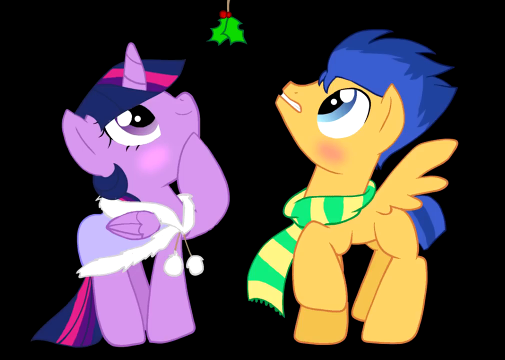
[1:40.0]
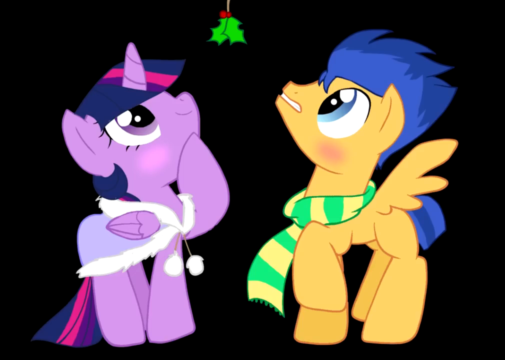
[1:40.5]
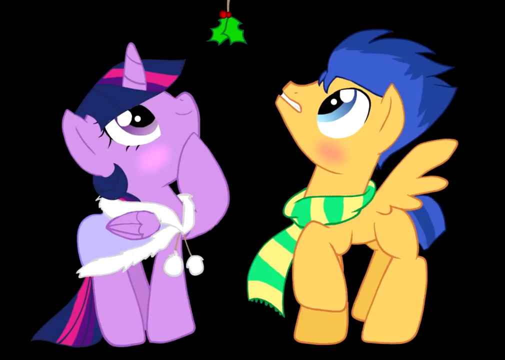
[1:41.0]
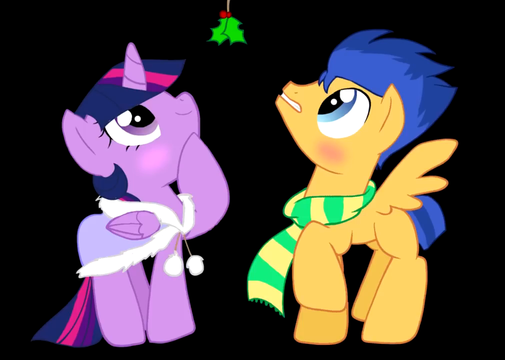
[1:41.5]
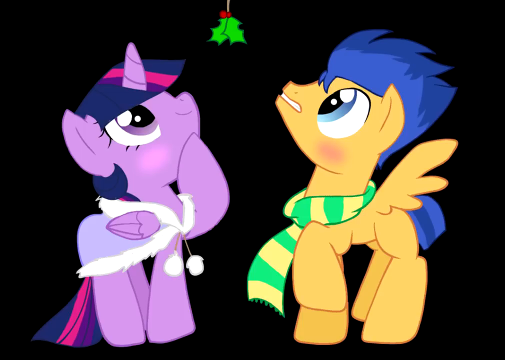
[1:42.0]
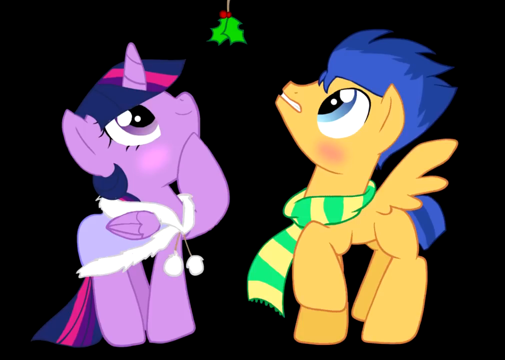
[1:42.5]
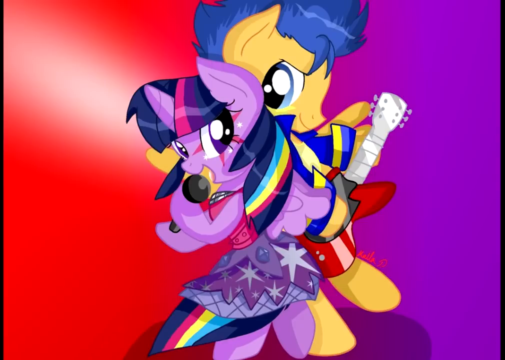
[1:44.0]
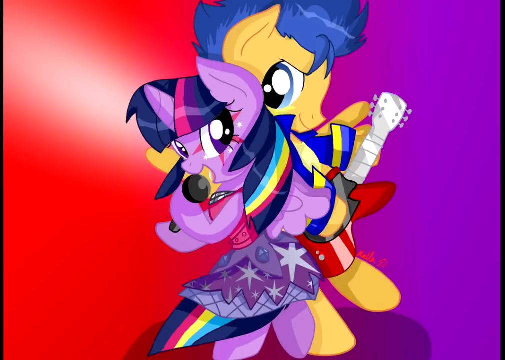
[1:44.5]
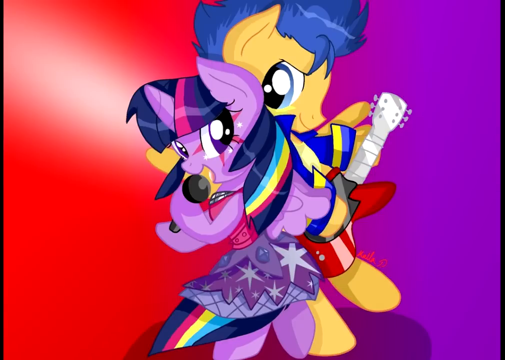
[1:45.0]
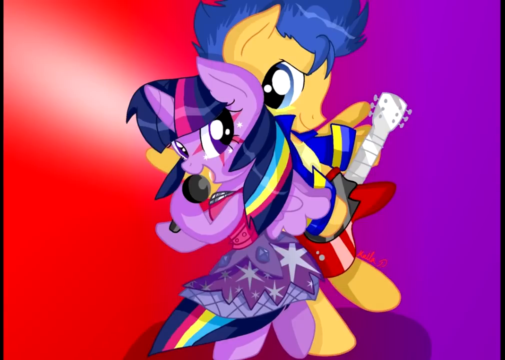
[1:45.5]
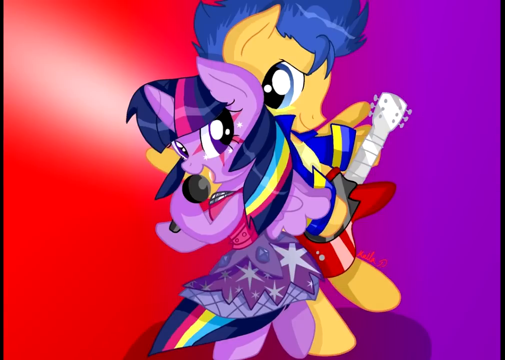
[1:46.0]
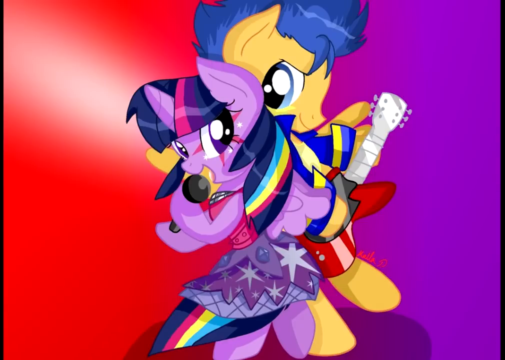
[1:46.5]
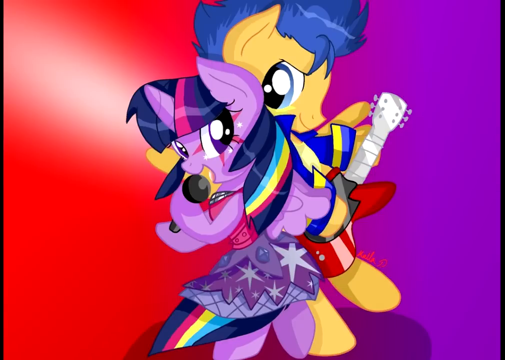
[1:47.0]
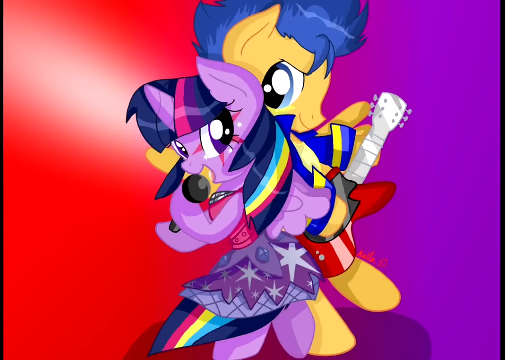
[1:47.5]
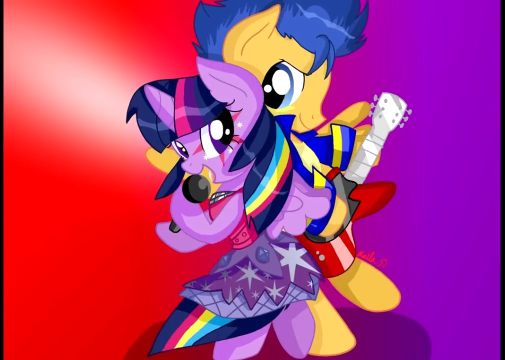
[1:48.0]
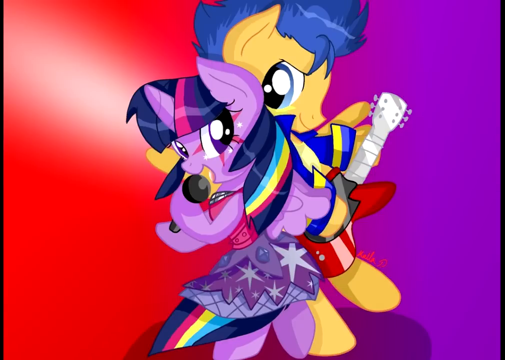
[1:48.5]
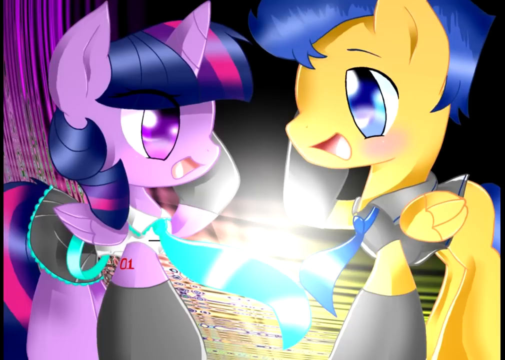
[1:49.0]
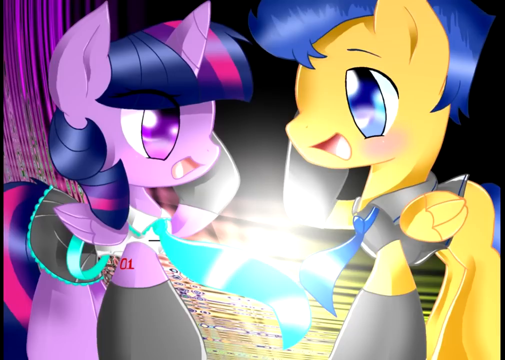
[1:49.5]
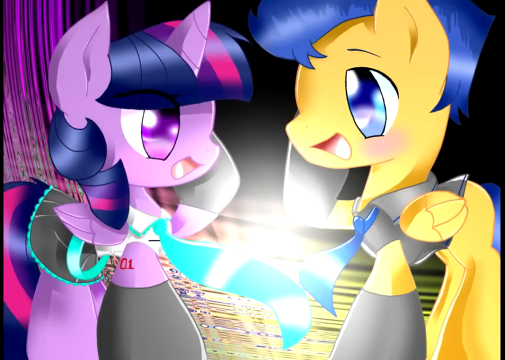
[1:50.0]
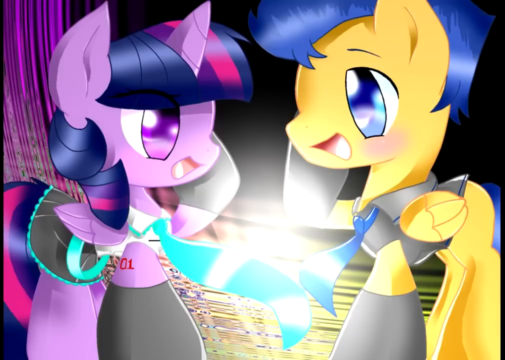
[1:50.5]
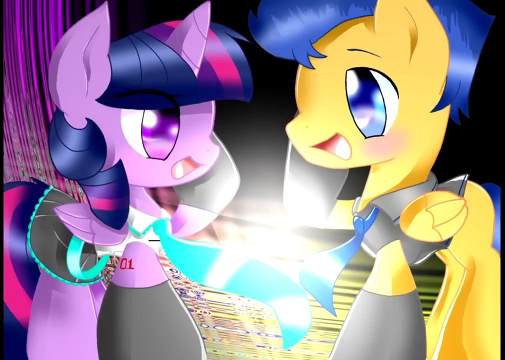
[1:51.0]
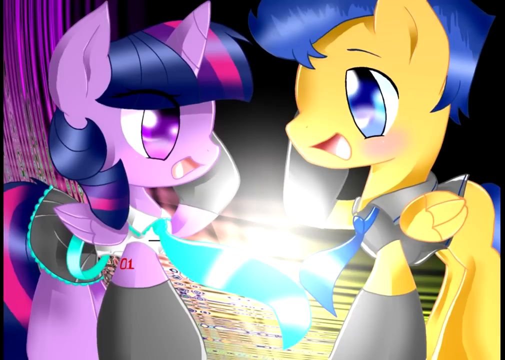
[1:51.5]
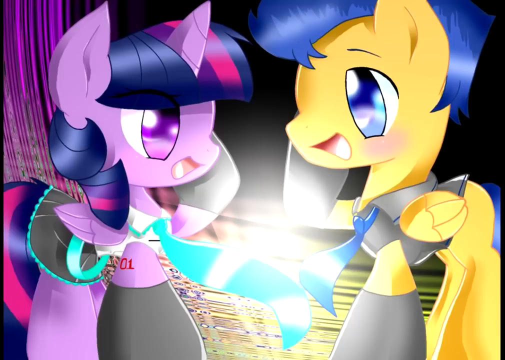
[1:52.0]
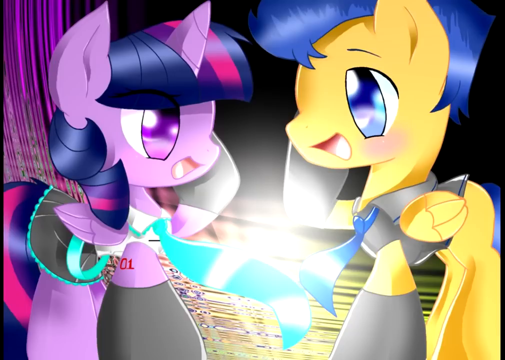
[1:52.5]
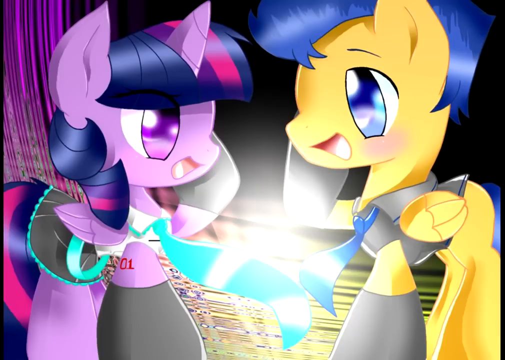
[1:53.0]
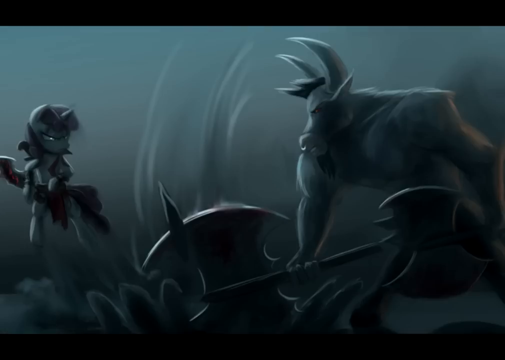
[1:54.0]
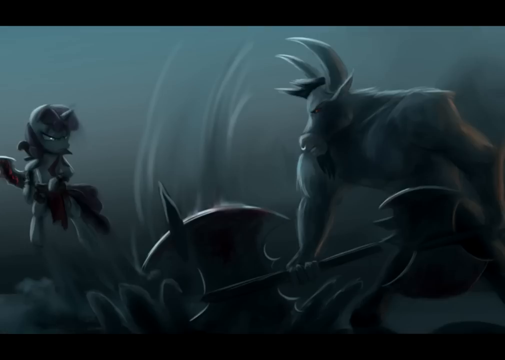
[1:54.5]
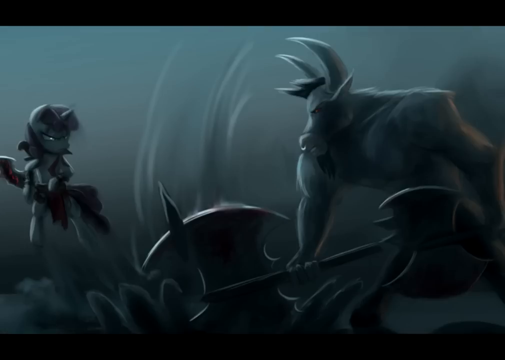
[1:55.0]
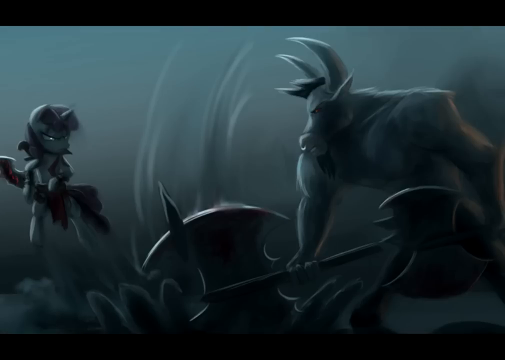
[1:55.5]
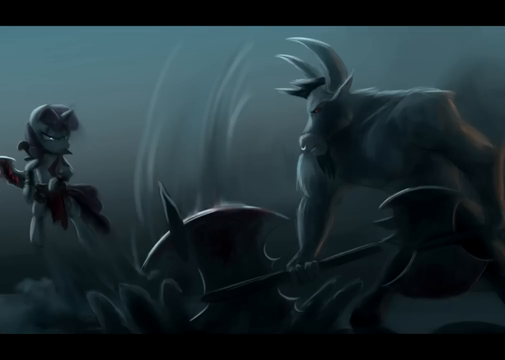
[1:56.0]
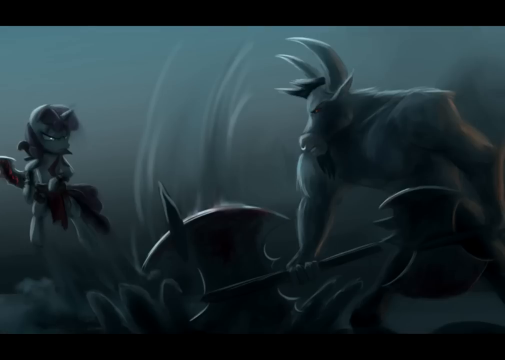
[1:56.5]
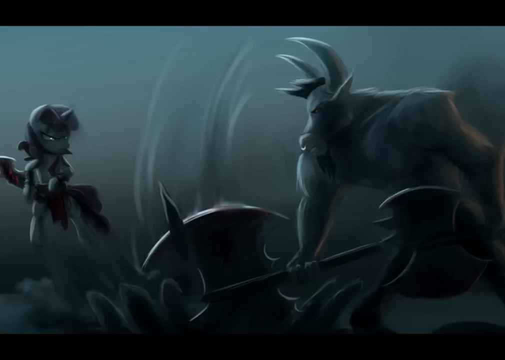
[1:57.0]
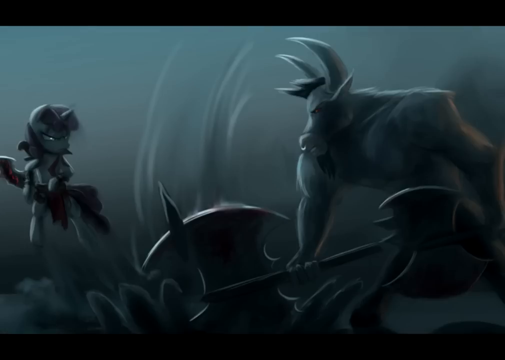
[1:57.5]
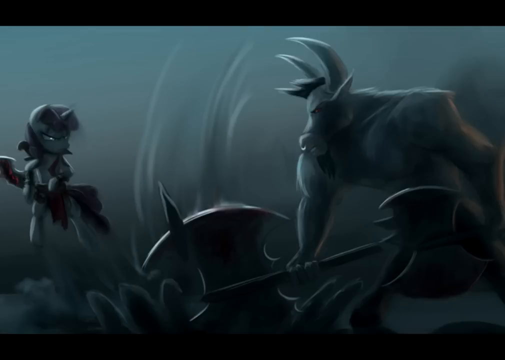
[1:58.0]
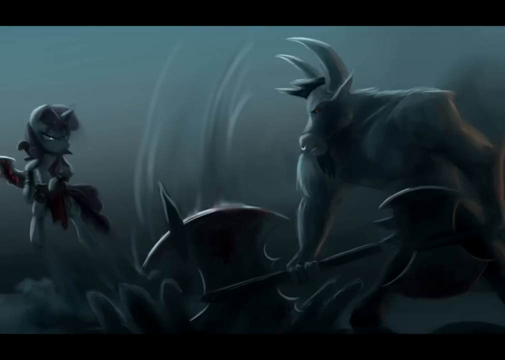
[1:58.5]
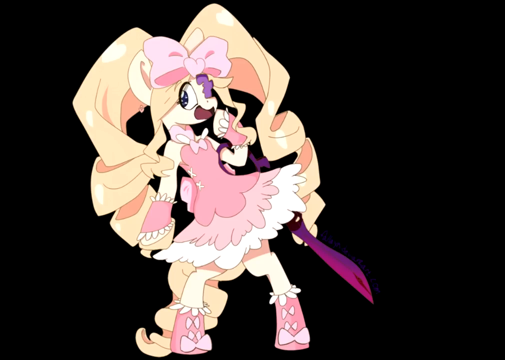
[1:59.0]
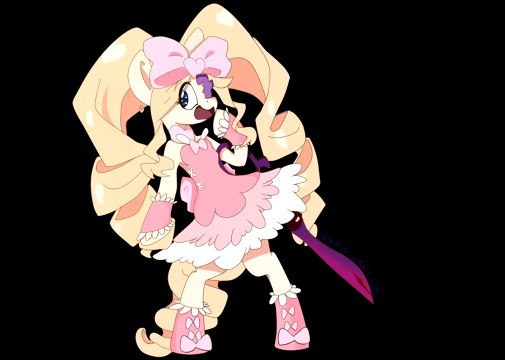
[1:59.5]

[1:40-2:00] The fan art shows two little ponies, a purple one on the left and a yellow and blue one on the right, both looking up at holly leaves and berries dangling from the ceiling against a black background. The same two ponies then appear in different fan art, singing and playing the guitar, and then wearing strange sort of crop top outfits. Next is art of the Minotaur with a big axe, and then a pony with a big pink bow on her head and a blonde, yellowish mane. She wears a very frilly, multi-layered pink dress with a bow at the neckline, and a very large pink bow in the middle of her forehead has a pink heart in its centre. She appears to wear some sort of footwear the same pink as her dress. There also appears to be a purple blade poking out, which she is not holding; it looks like it might be attached to a strap around her arm, though this is not very clear from the drawing.